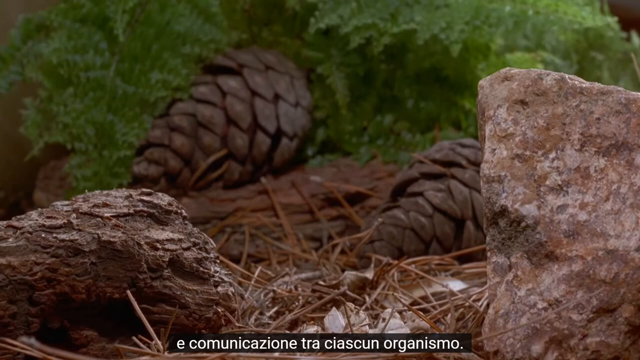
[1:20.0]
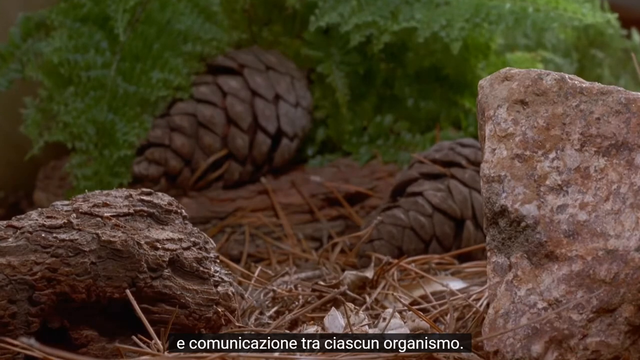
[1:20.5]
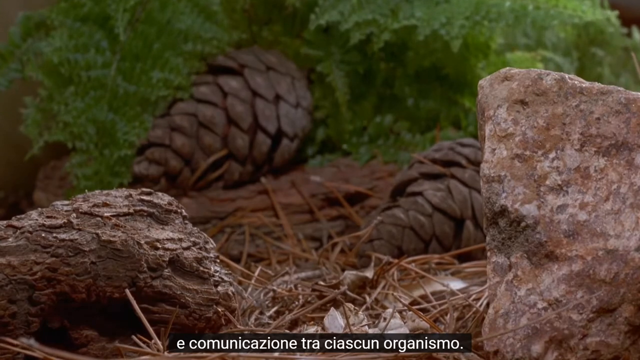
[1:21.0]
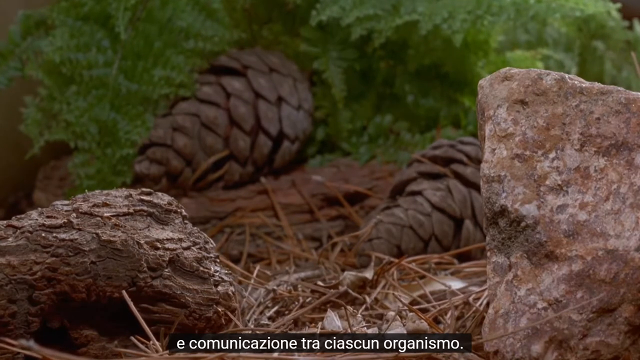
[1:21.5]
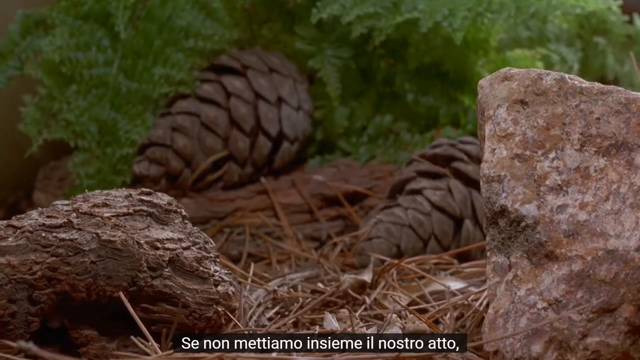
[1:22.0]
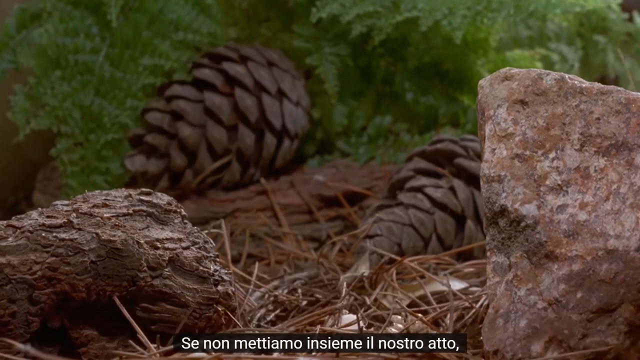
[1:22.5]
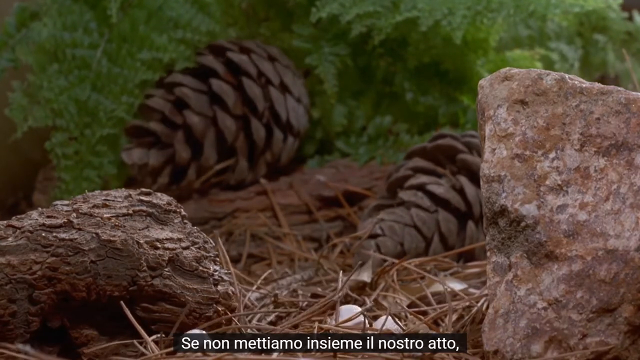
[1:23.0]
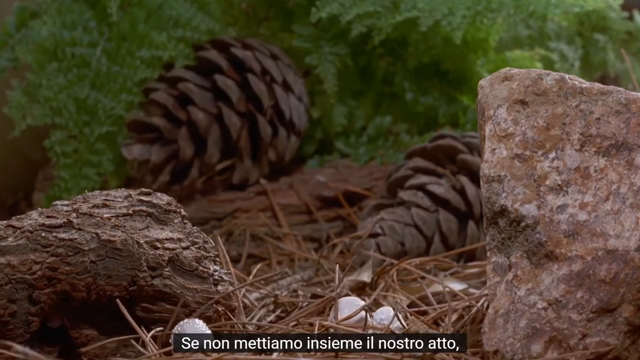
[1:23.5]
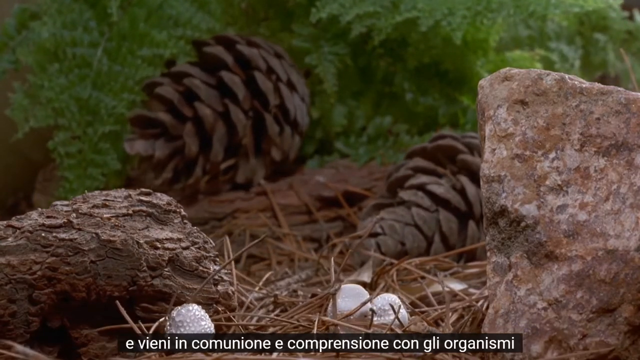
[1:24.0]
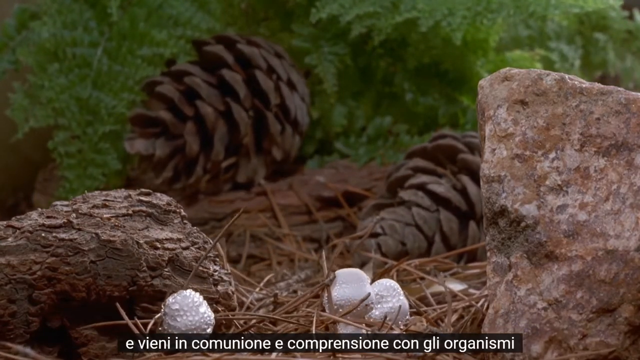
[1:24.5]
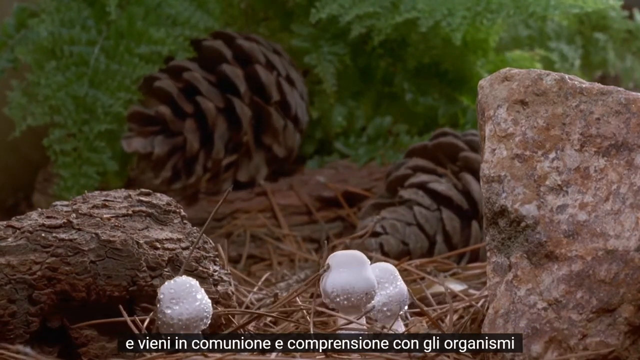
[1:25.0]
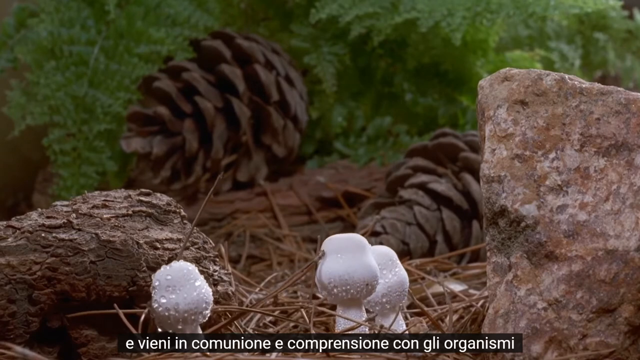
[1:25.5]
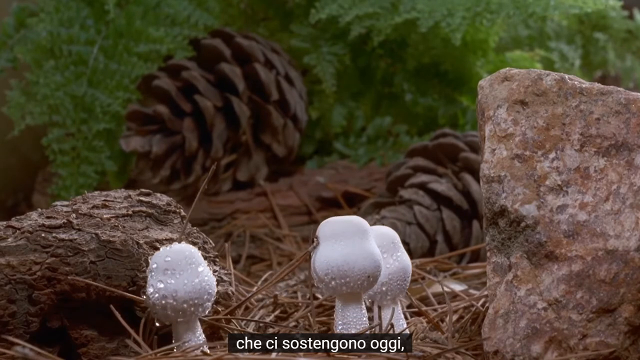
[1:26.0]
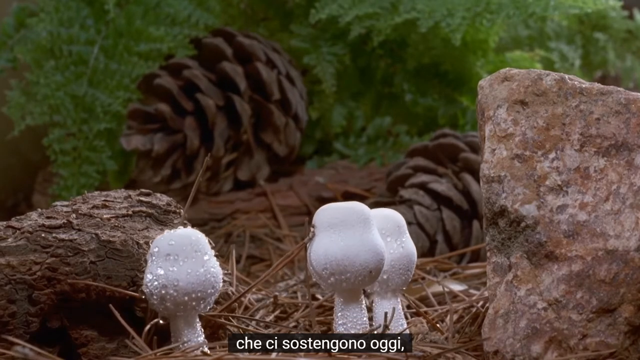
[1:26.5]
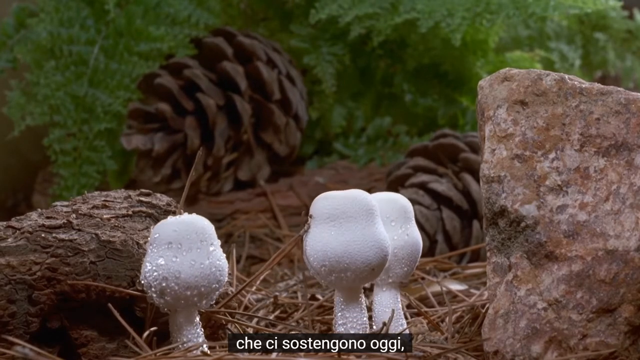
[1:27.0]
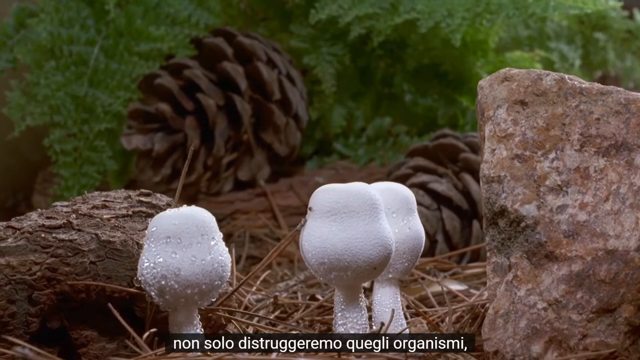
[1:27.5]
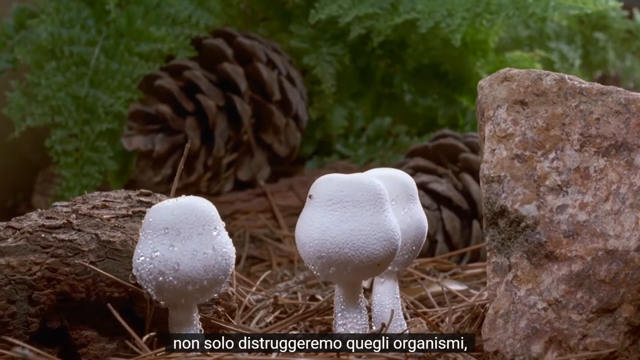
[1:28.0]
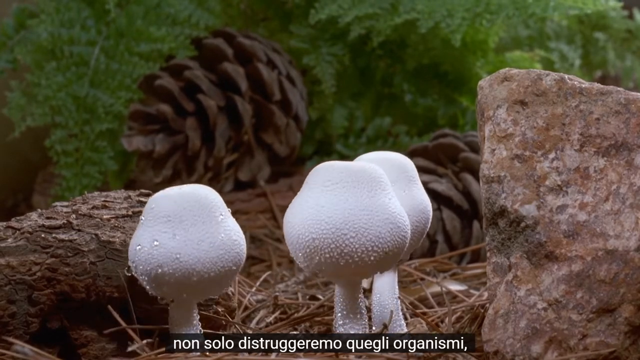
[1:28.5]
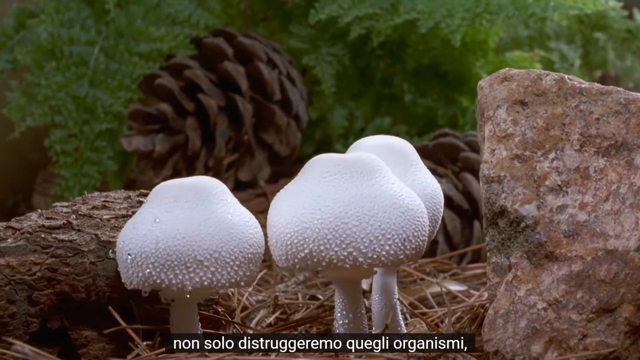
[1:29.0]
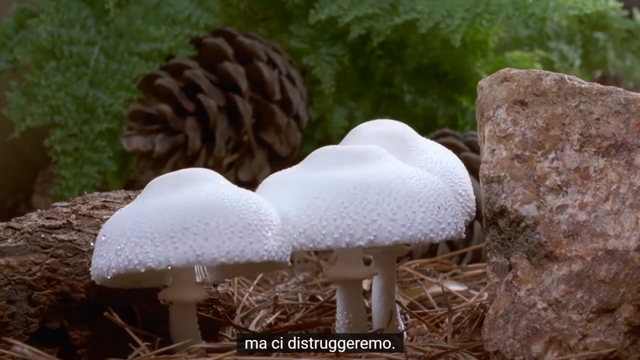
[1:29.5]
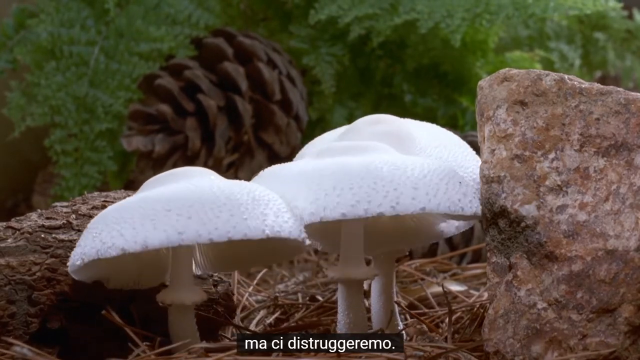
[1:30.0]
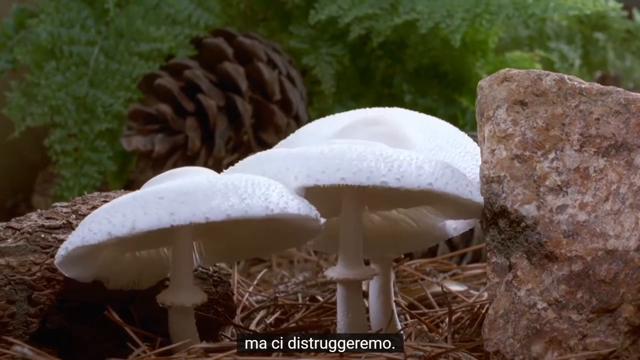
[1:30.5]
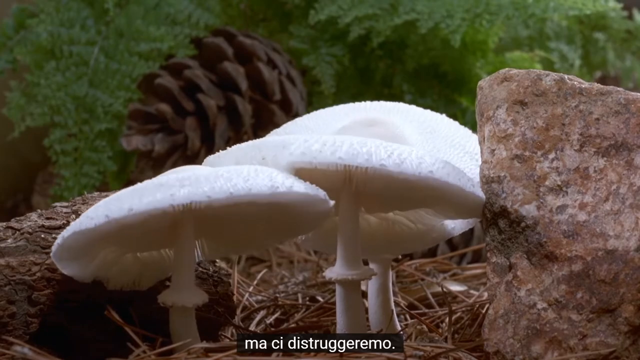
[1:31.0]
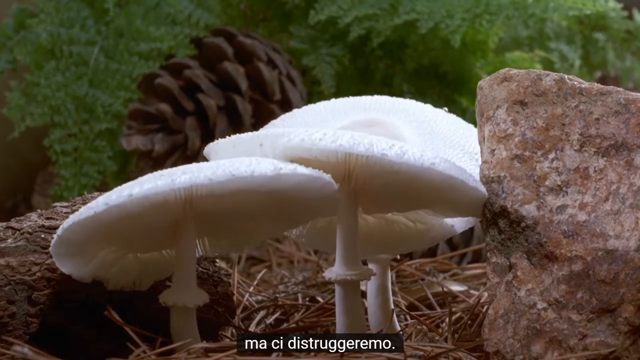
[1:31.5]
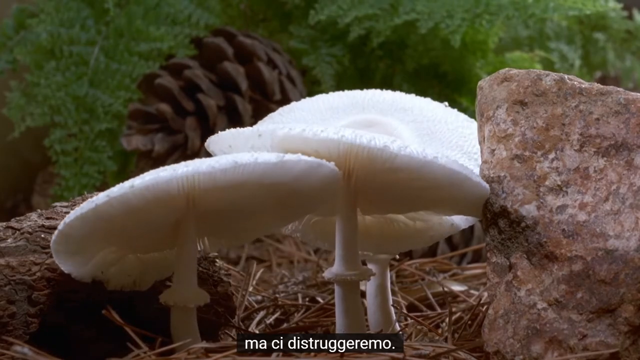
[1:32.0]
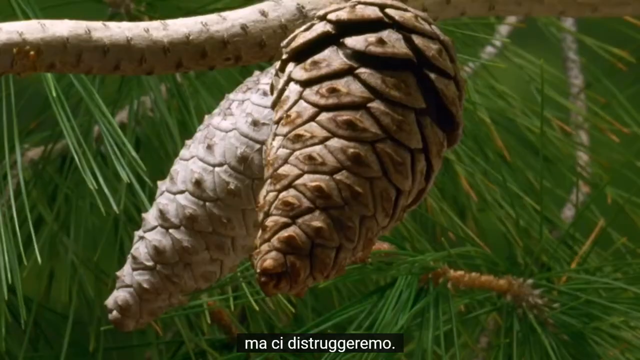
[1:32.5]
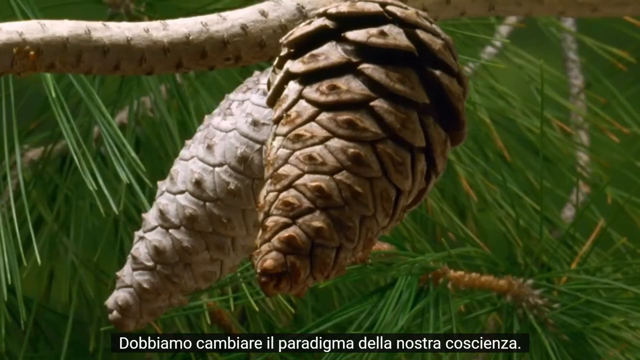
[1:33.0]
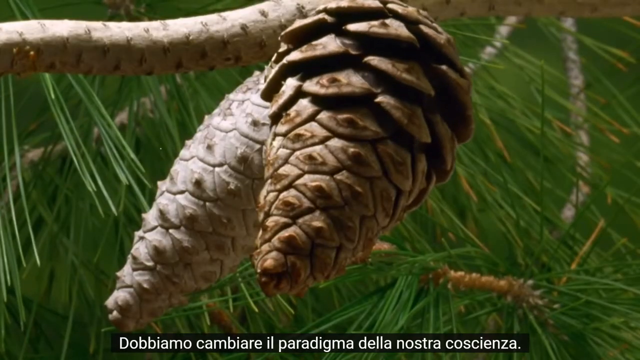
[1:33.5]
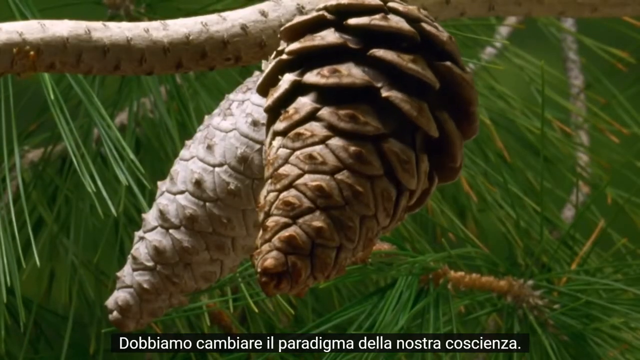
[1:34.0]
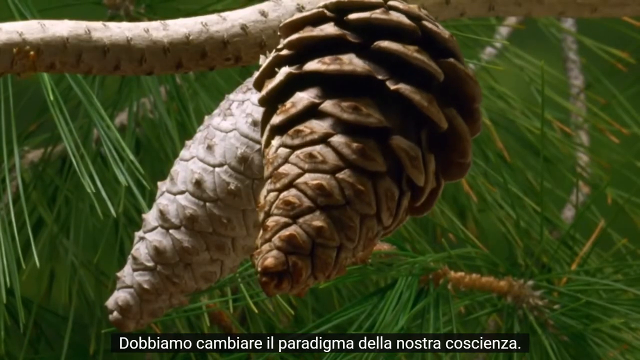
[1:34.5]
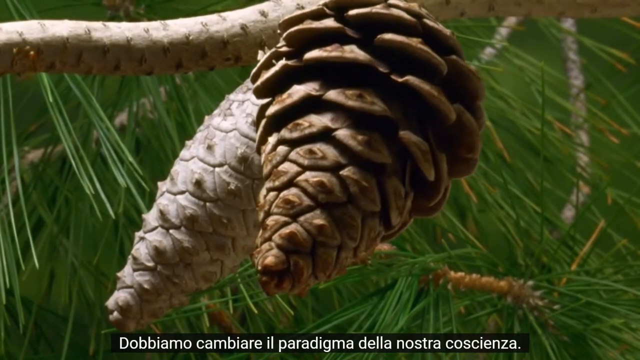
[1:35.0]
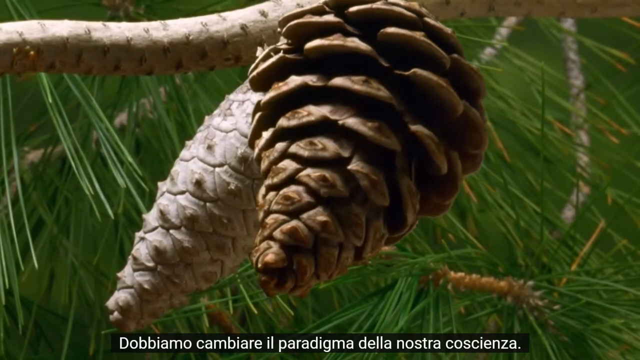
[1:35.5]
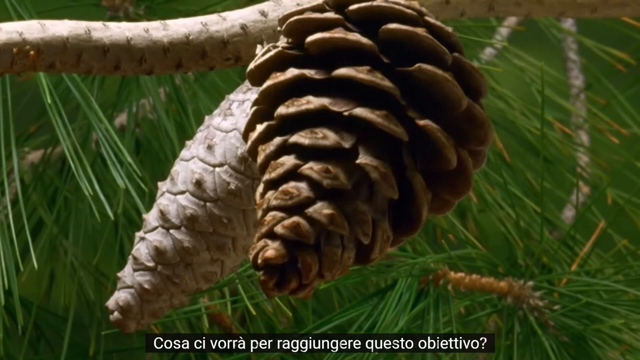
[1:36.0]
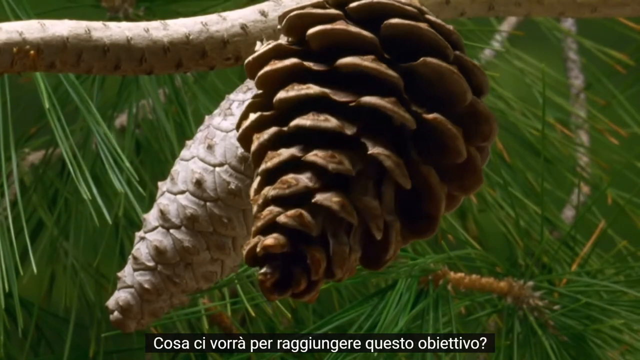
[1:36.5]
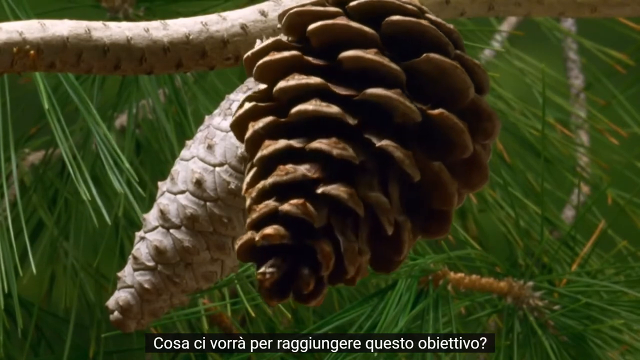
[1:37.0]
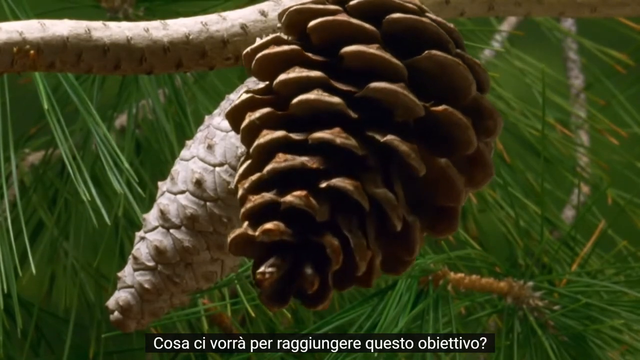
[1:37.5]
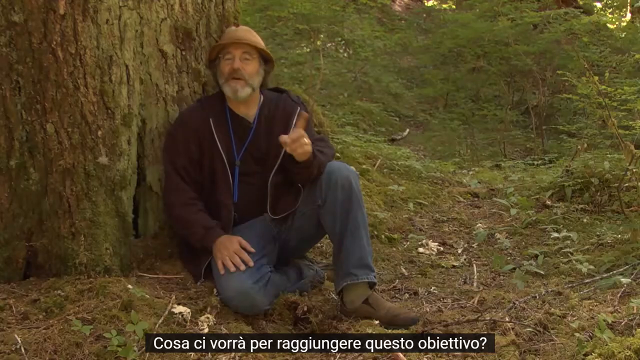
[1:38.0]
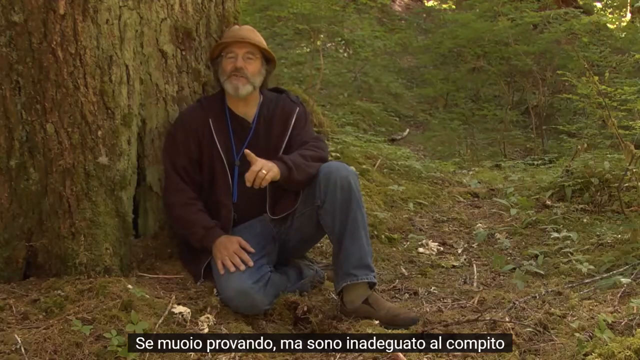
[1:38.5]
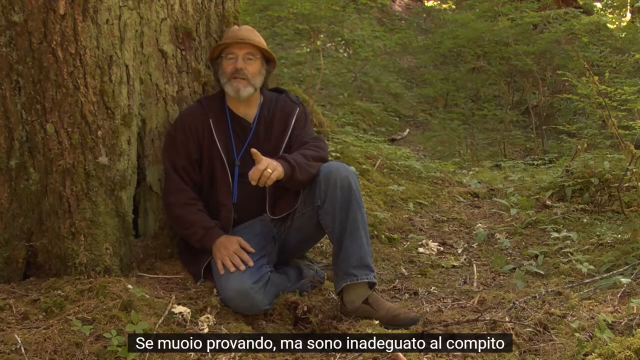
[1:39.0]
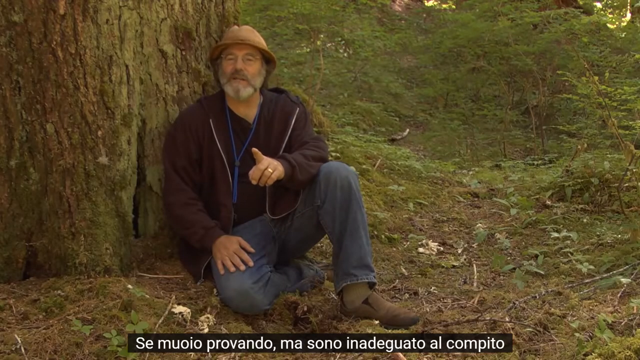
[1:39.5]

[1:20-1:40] A grey rock is on the right-hand side, covering about 20% of the screen's width and about 80% of its height; it is rectangular and vertical, with a slight drop at the top from left to right, so it is not level. A piece of wood is on the left-hand side, maybe a third of the screen wide and a third high, slightly triangular, smaller at the edge of the screen than towards the centre. A partially hidden pinecone at roughly 45 degrees is mostly visible from behind the rock, and to the left, above the piece of wood, is another pinecone at 45 degrees. Behind the rocks and pinecones is foliage, some ferns, and in the centre of the screen between the two pinecones and the rocks are twigs. As the scene progresses, the pinecones start to open, with a lot of movement in the pinecone on the left. Mushrooms then appear at the very bottom of the screen: two at the centre and just to its right, and another to the left. Only their white heads, the caps, are visible at first, and they seem to have water droplets on them, quite a lot on the one to the left and a little less on the two at the centre and centre right. The stalks then appear under the heads, which are maybe three times the width of the stalks. The heads have not started to unfurl, but as they get bigger they enlarge at the bottom and develop into mushroom caps. All three then have lots of moisture droplets on the bottom section of the caps. The caps extend out and unfurl, revealing the veins underneath. The video cuts to another scene with two pinecones that appear to be on a branch. One dominates the scene, taking up a third, maybe a quarter of it and almost filling it from top to bottom, at a slight angle biased towards the left. Another pinecone is behind it at 45 degrees, slightly paler and more grey. At the top, a branch runs from the left to the centre of the screen and ends behind the main pinecone, with lots of pine leaves and some smaller branches behind. The top section of the prominent pinecone, which is attached to the branch, starts to expand and unfurl until the whole pinecone is open. The video then cuts to Paul Stamets, who is sitting, leaning slightly against a tree trunk with his right shoulder. The trunk takes up about a quarter to a third of the screen on the left-hand side and has a slit in its center, just to the left of Paul. To the right is a woodland scene with a slight uphill path barely visible in the undergrowth and lots of trees and foliage behind. Paul wears jeans and a dark blue jacket, and has a hat, glasses, a beard and a moustache; he moves his left hand while talking, and then the scene ends.